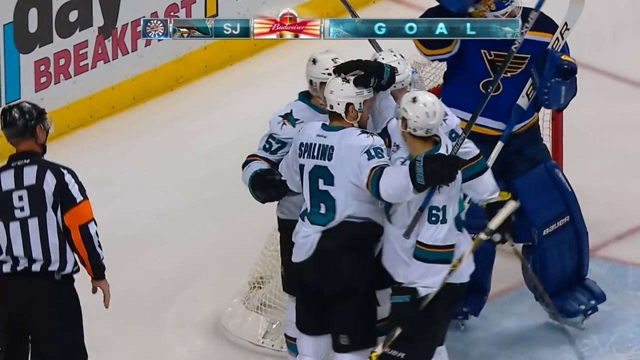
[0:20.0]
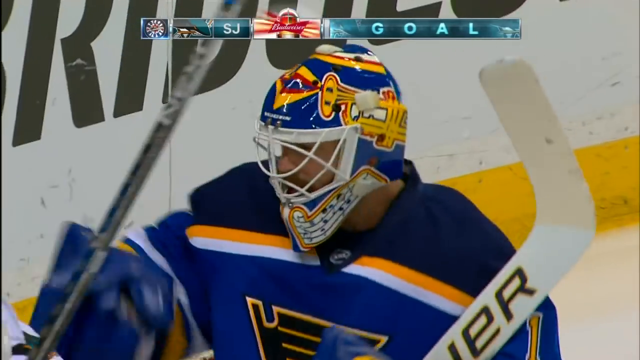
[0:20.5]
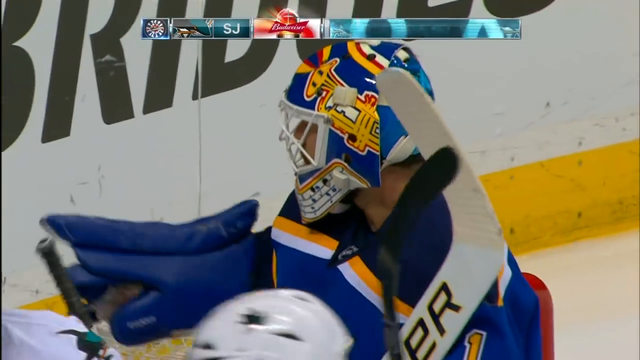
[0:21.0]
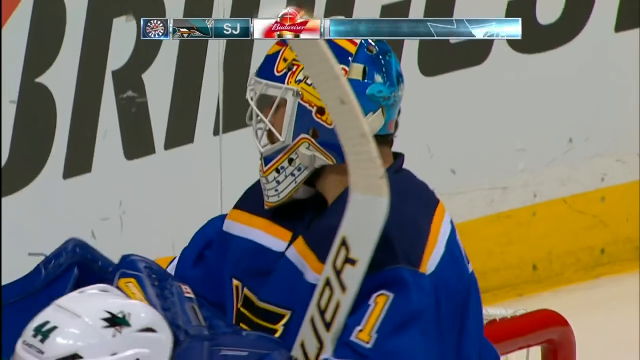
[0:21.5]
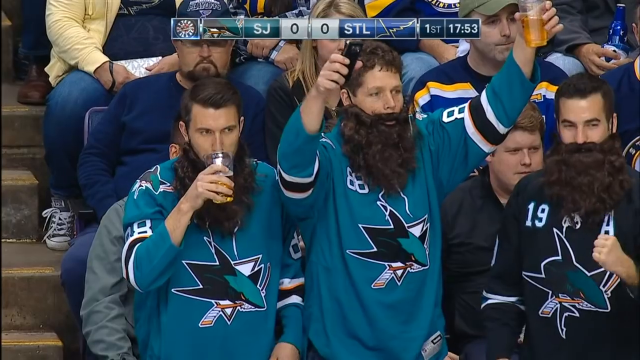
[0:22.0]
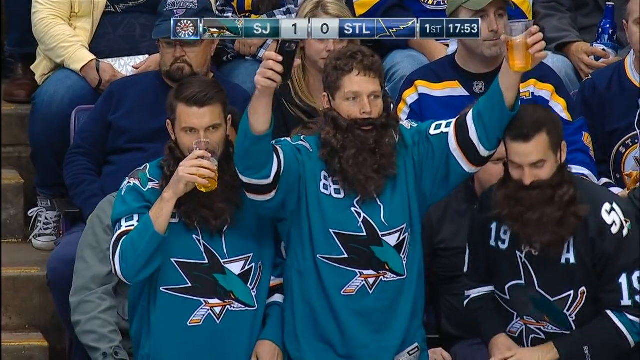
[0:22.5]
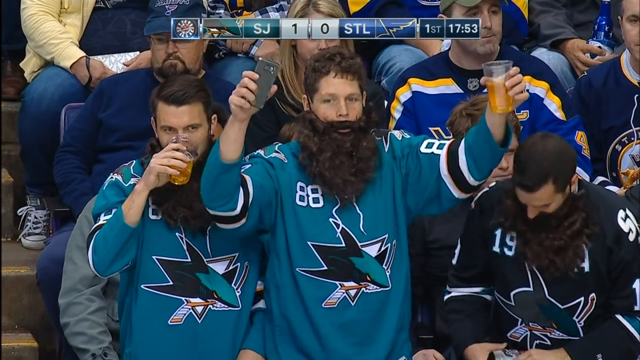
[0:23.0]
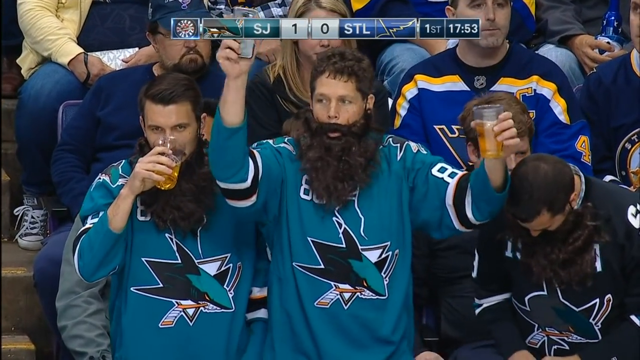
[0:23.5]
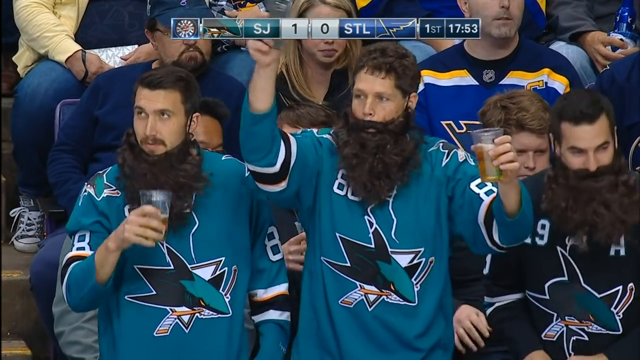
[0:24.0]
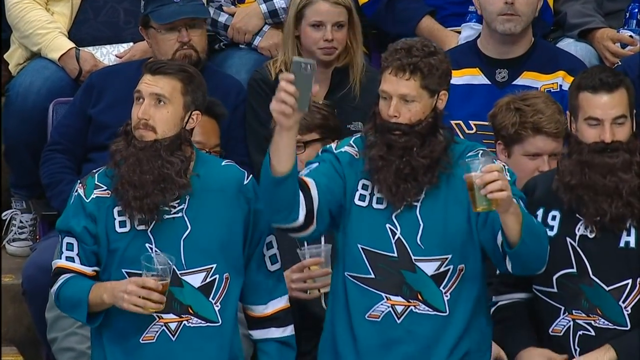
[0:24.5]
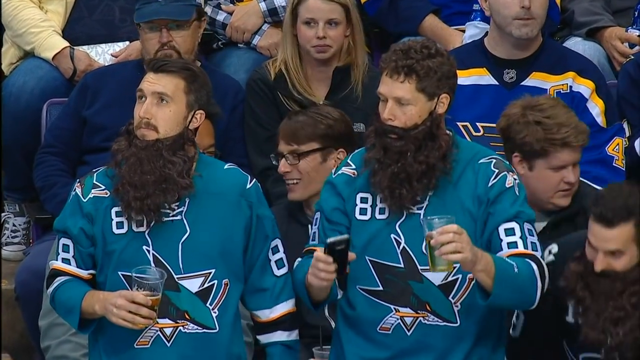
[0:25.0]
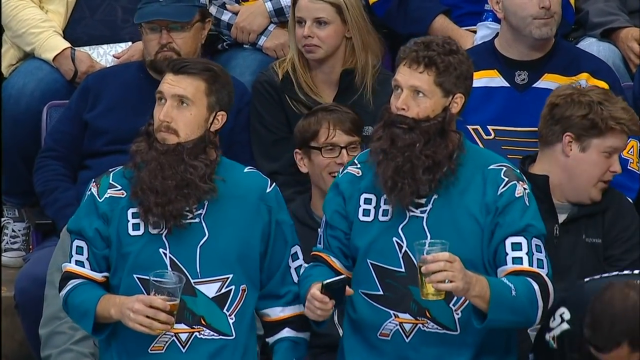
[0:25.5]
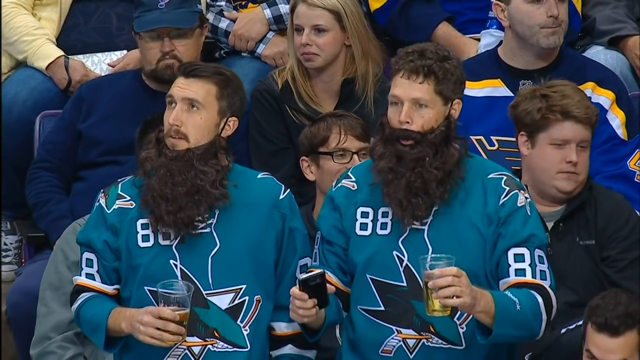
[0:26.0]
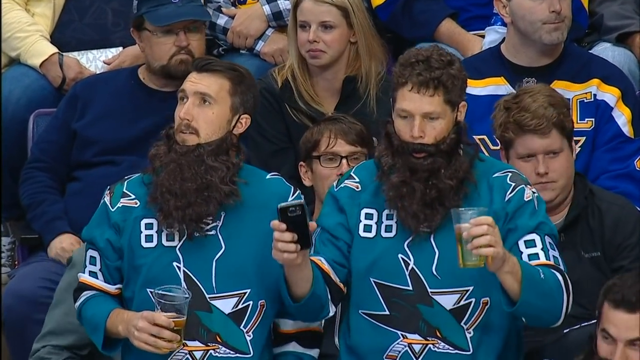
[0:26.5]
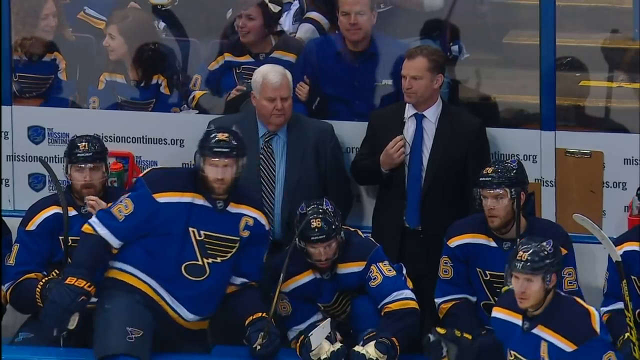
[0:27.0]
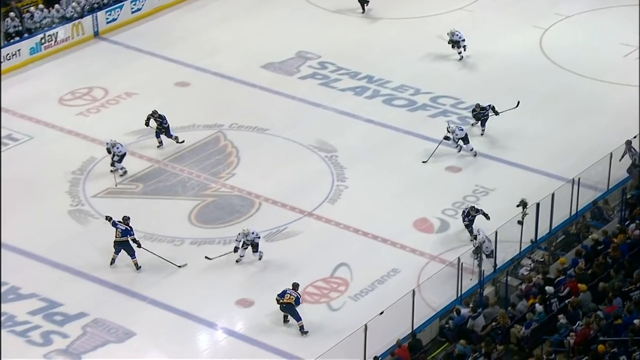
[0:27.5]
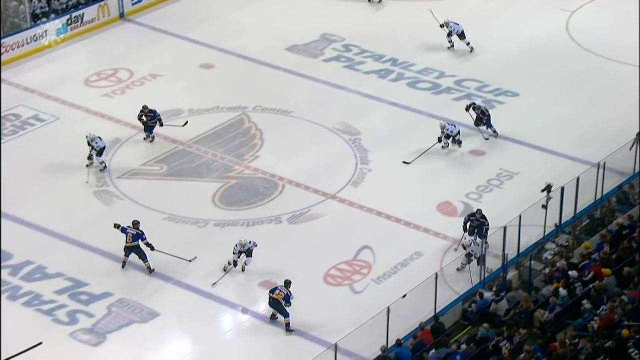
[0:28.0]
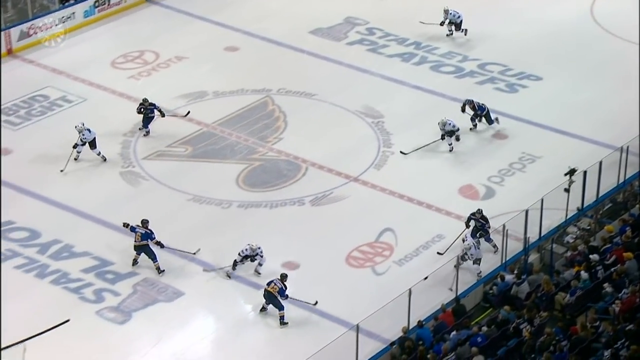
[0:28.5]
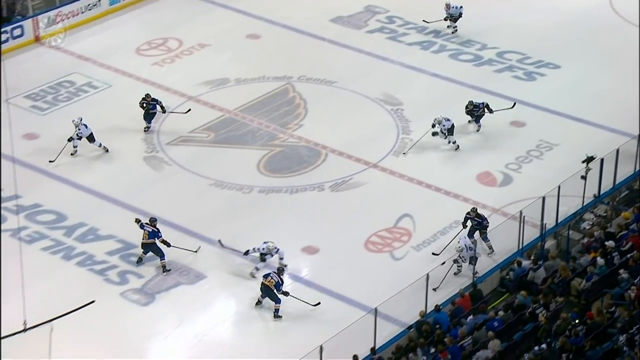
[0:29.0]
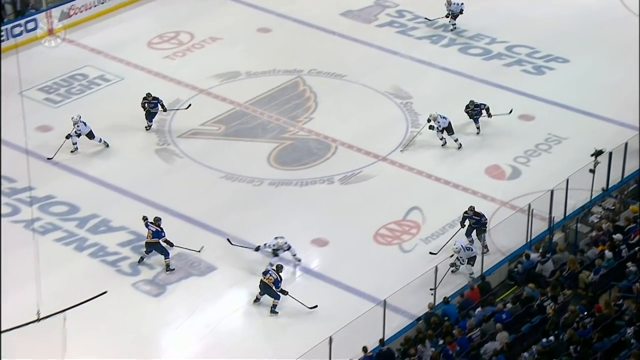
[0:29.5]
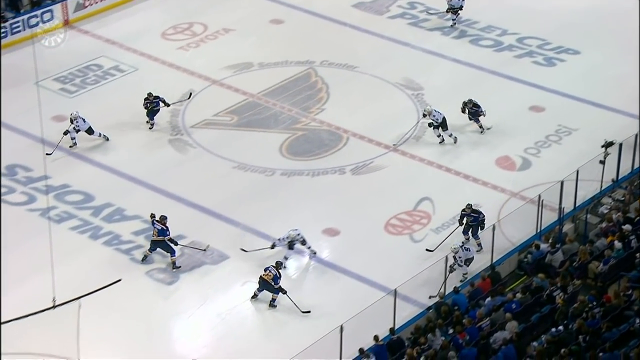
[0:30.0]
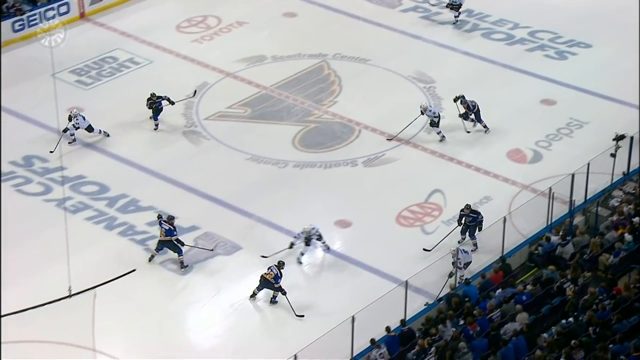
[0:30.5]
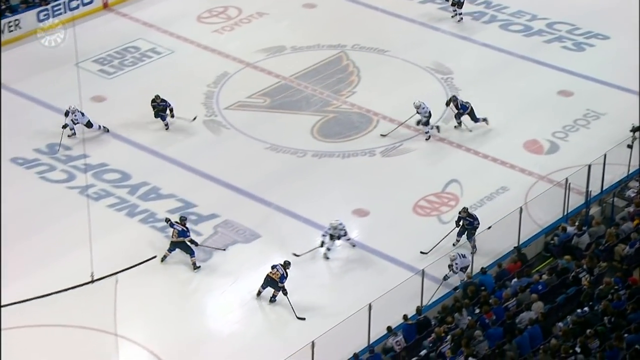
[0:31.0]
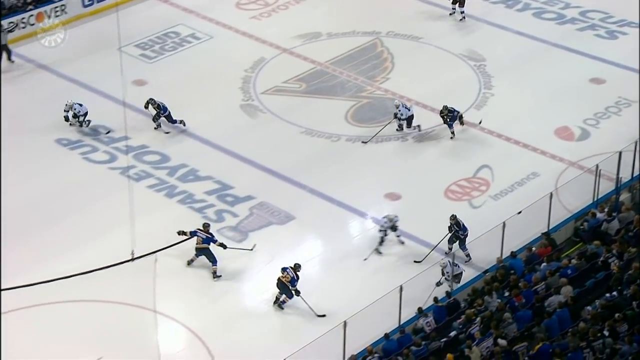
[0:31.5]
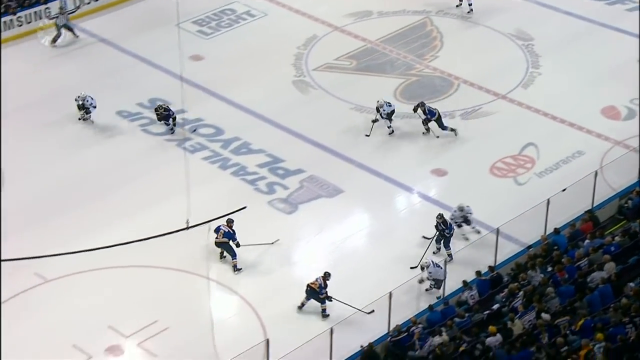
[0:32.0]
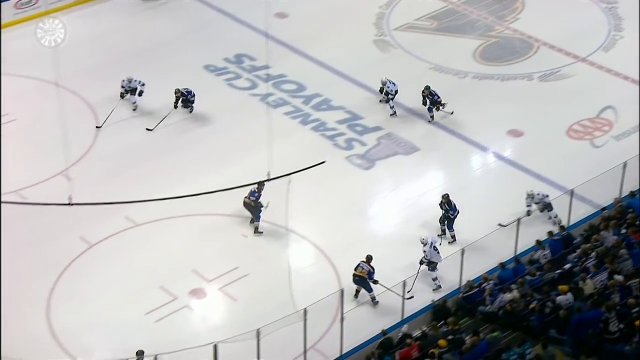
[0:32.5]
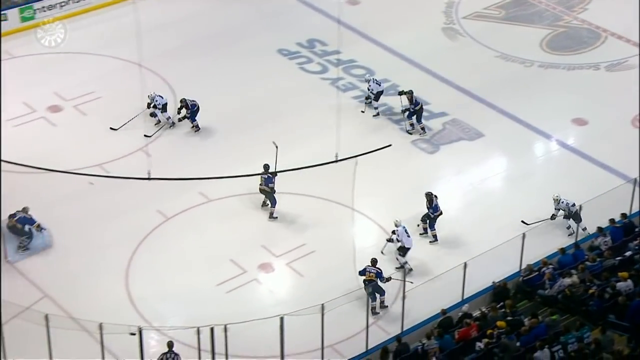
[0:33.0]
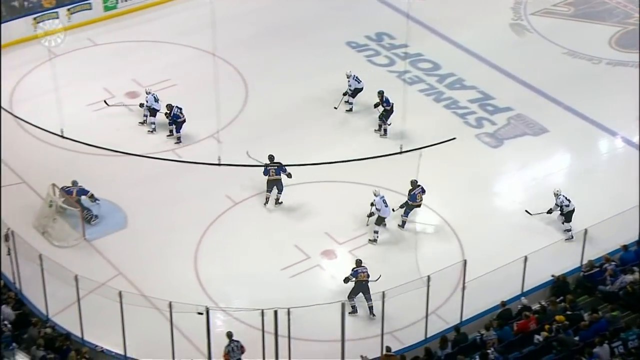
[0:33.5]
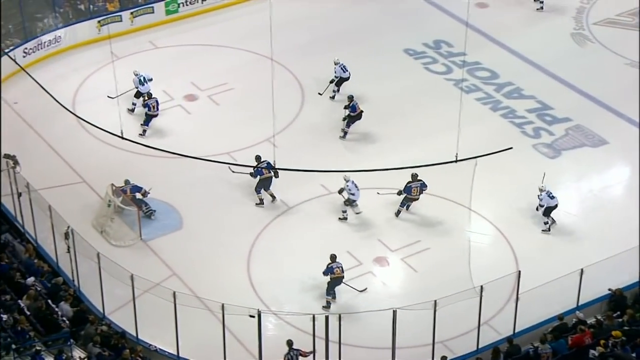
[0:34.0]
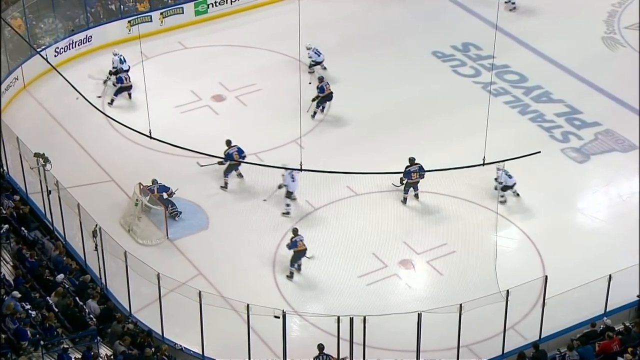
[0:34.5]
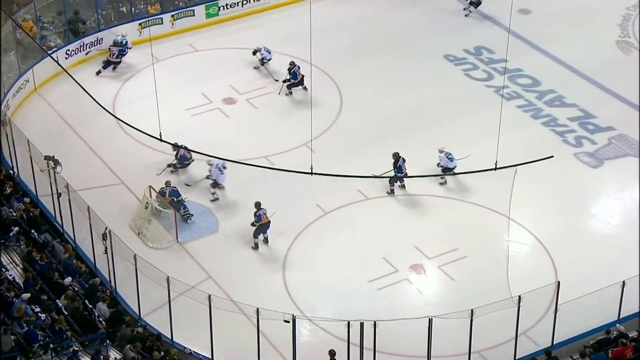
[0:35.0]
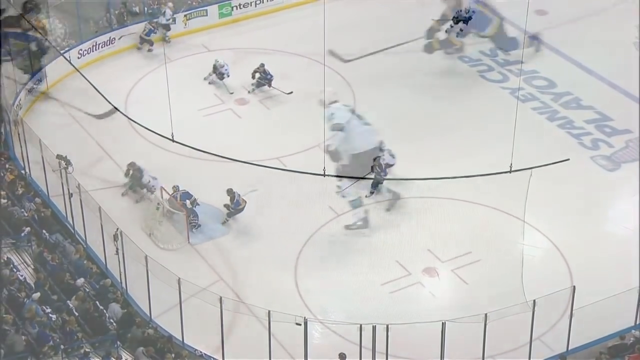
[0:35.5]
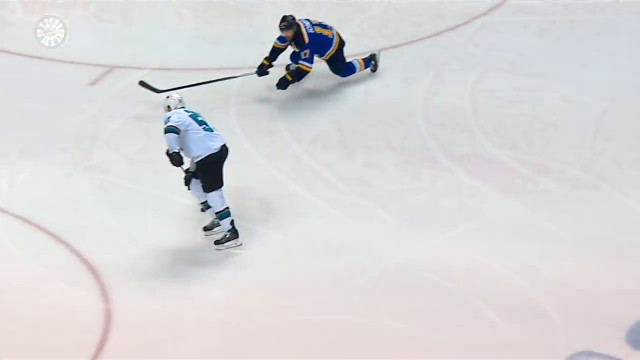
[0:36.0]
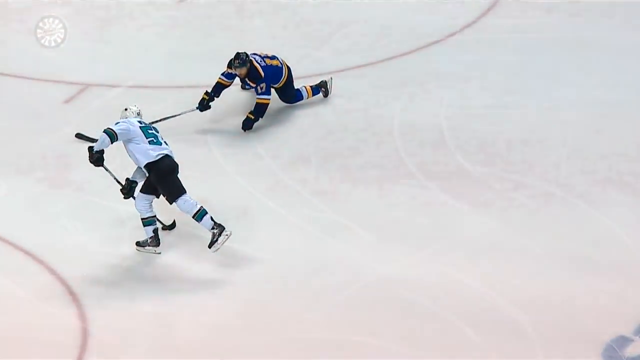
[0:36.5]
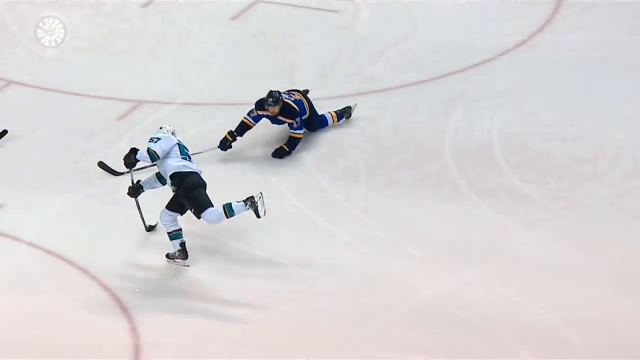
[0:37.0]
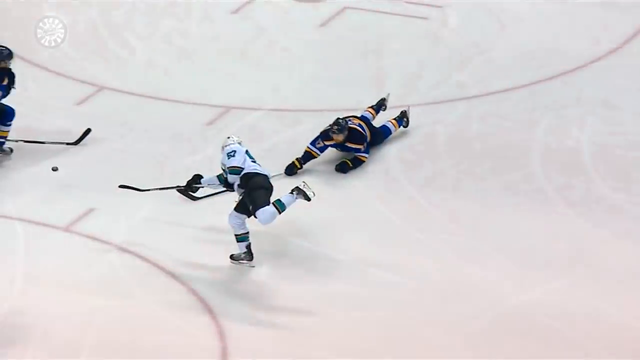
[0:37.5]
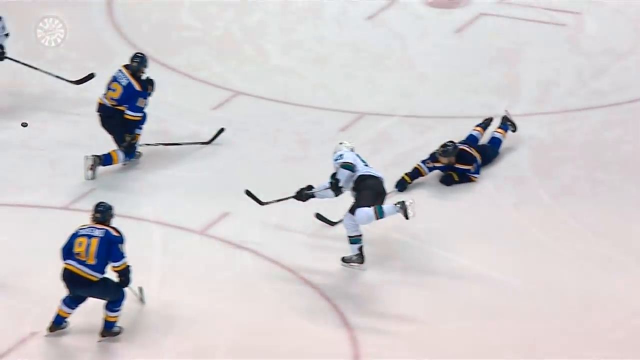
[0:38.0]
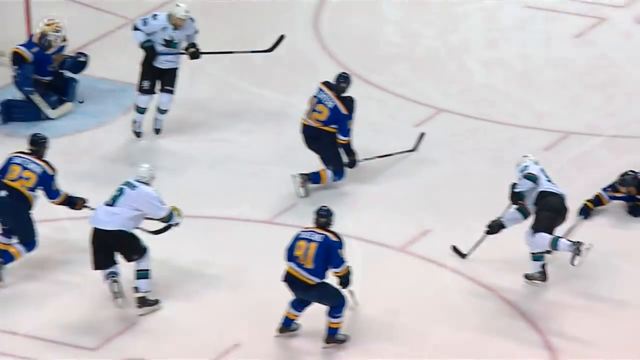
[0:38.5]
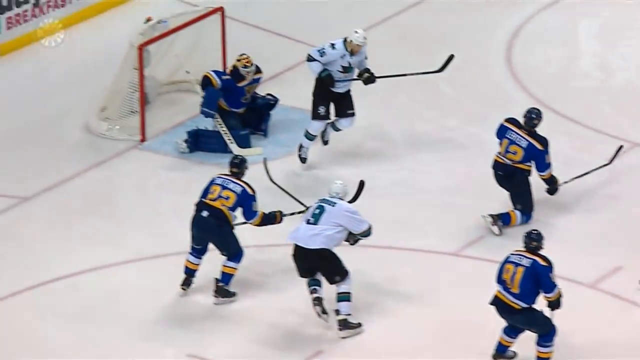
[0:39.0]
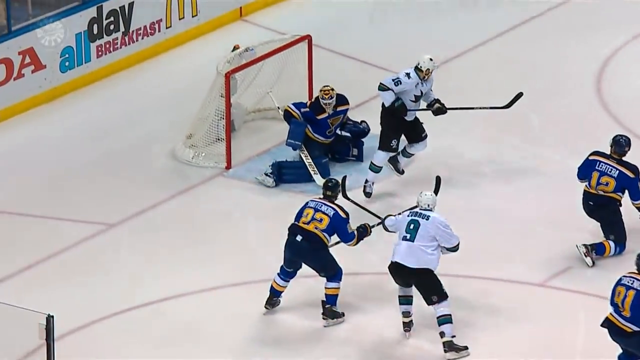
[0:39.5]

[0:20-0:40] Multiple people in white jerseys with letters are gathered. At the left is a referee with the number nine on his back, wearing a white shirt with black stripes and a helmet, looking at the group hug. The view switches to a player in a blue jersey with a yellow trumpet on the side of his helmet; the rest of the helmet is blue with some red highlights. He looks to the left and has what appears to be an arm guard; he is perhaps a goalie. He then looks to the right while angling his hand out to the right. The view switches to people in the audience wearing bright blue jerseys with a shark logo in the center, the shark holding a hockey stick in its teeth. They all wear what appear to be fake beards. The person on the left has a beard and drinks a beer. The person in the center holds a phone in his right hand and a beer in his left, also wears a fake beard, and waves the phone around in the air. The person on the right is kind of looking down to the left.